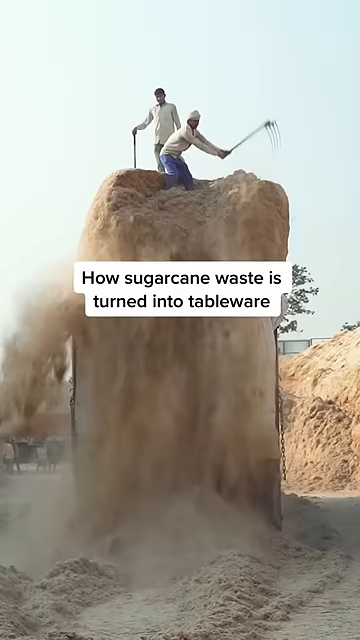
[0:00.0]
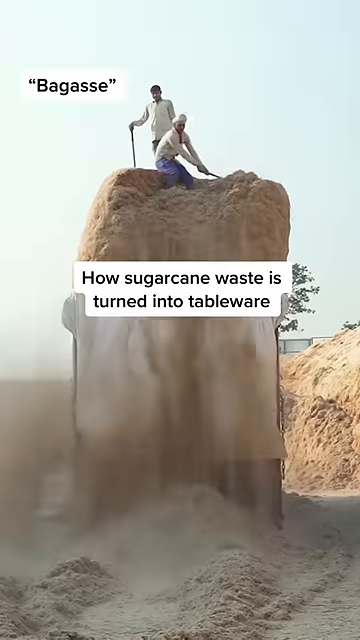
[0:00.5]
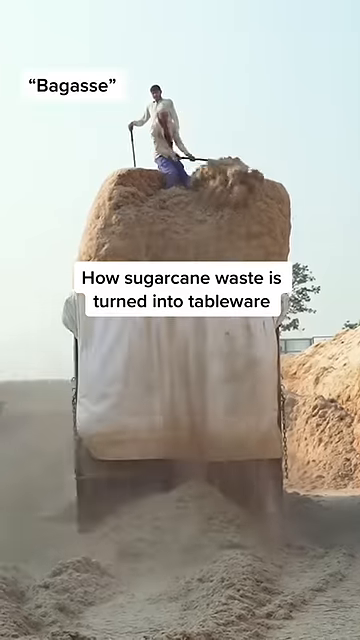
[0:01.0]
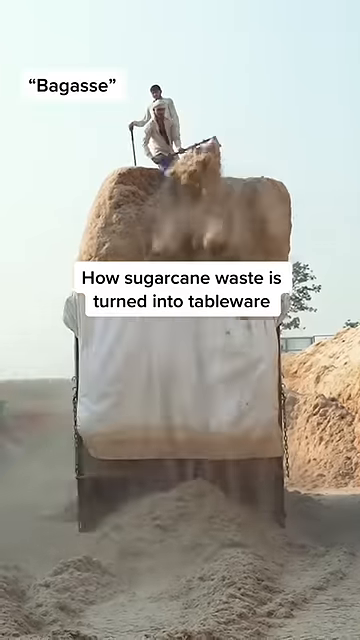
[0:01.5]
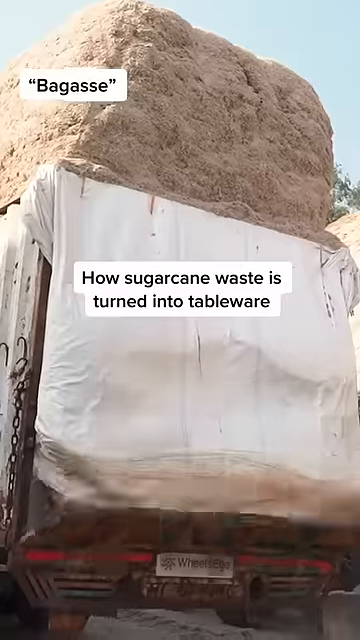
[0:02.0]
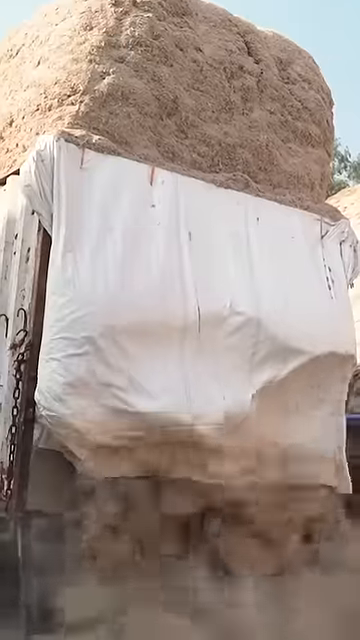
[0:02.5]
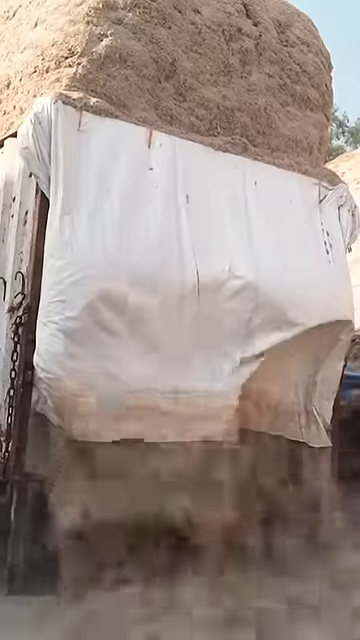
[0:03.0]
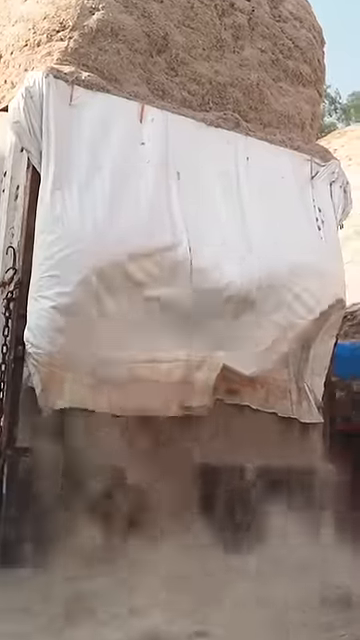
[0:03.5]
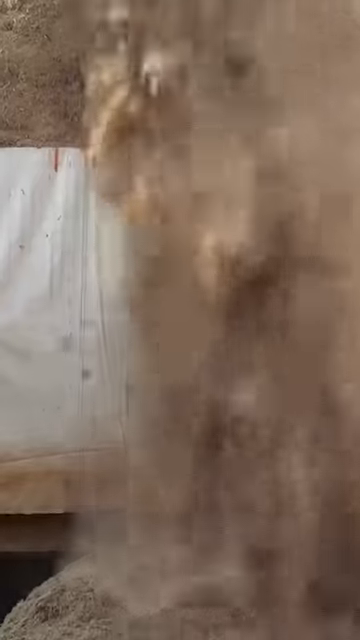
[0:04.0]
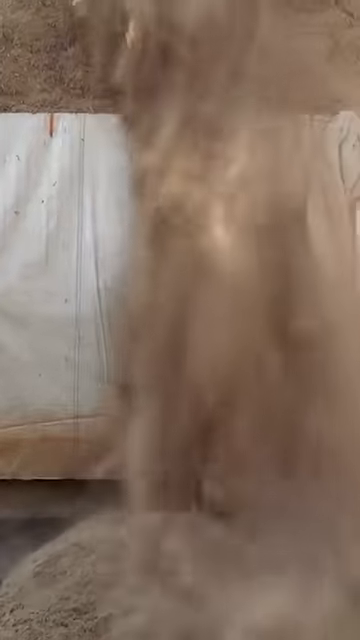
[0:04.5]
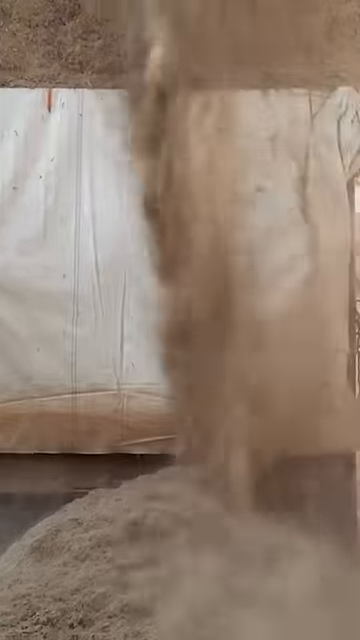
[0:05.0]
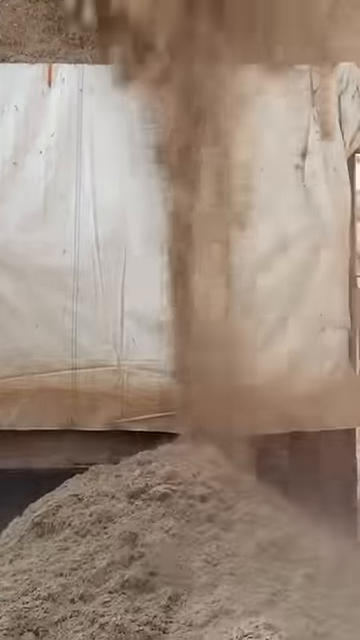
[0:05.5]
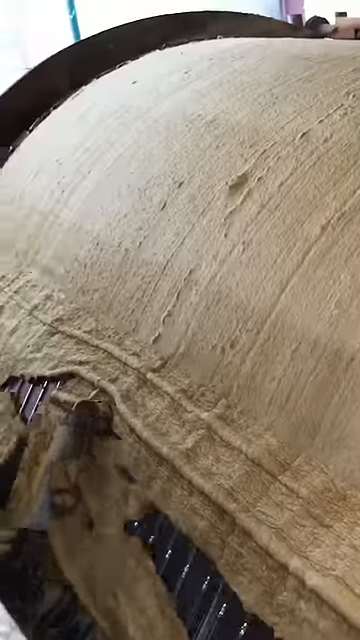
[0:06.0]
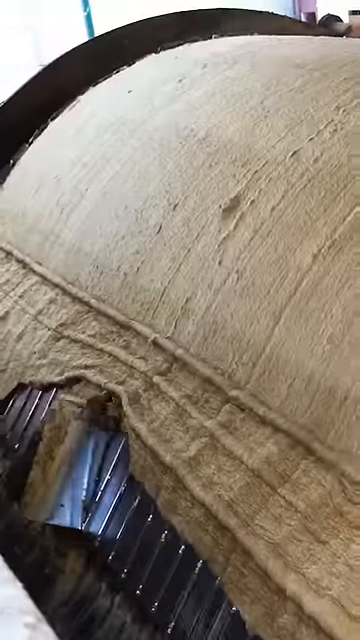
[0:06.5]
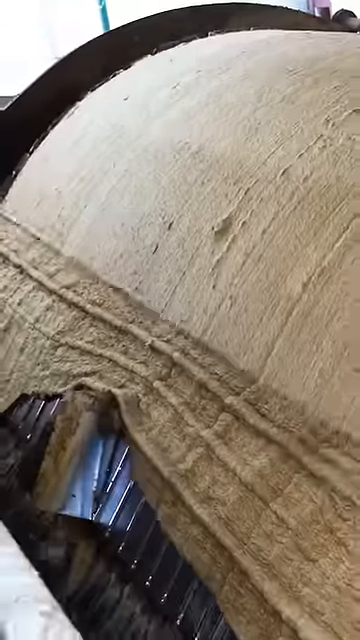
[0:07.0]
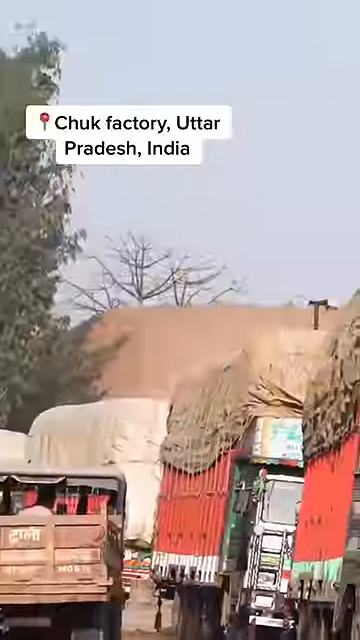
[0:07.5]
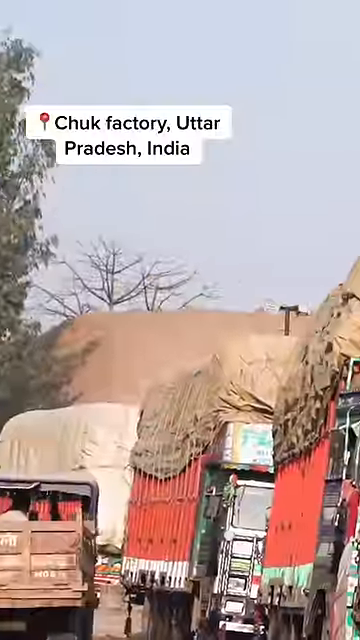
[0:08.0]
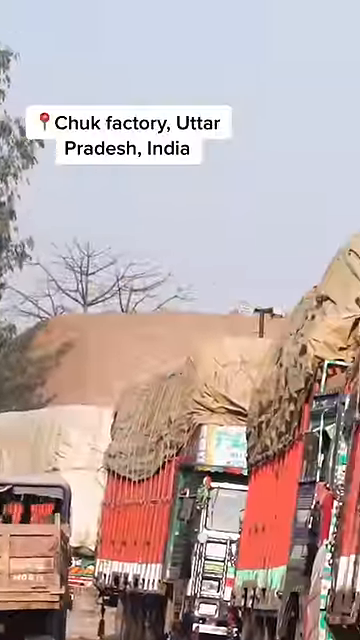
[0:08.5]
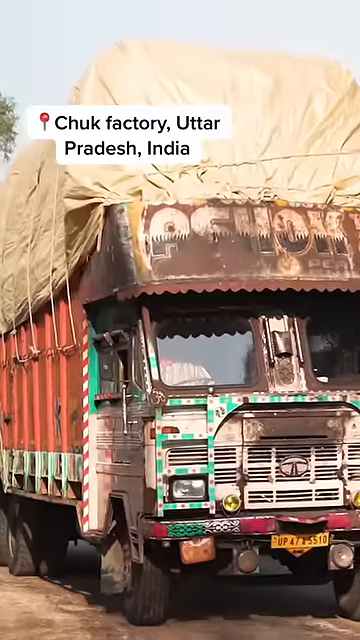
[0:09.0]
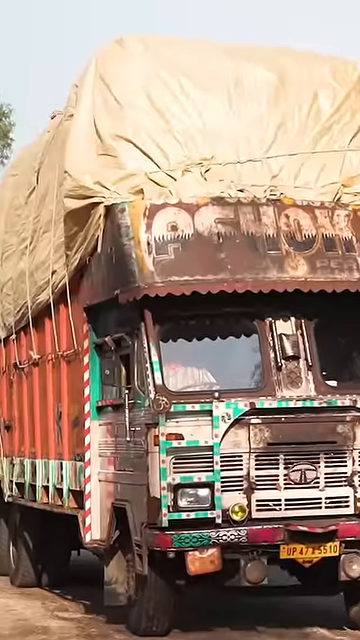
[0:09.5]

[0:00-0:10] Made by Insider Science, the video shows how sugar cane waste is turned into tableware. It shows the Chuck factory in India, where men on top of a large truck filled with a lot of sugar cane waste brush it off the side and onto the ground. Another shot shows all of the sugar cane waste being slowly sifted onto the ground from various trucks. A panning shot then moves across multiple trucks with red siding, filled with sugar cane waste.